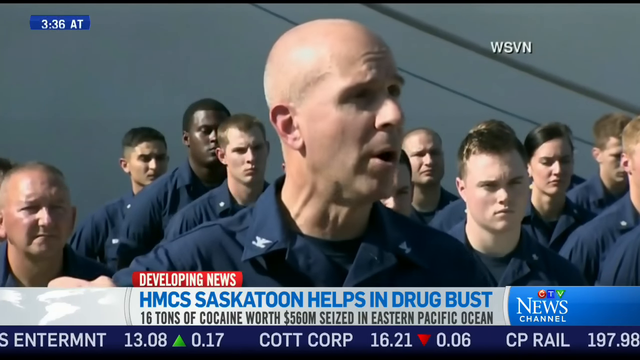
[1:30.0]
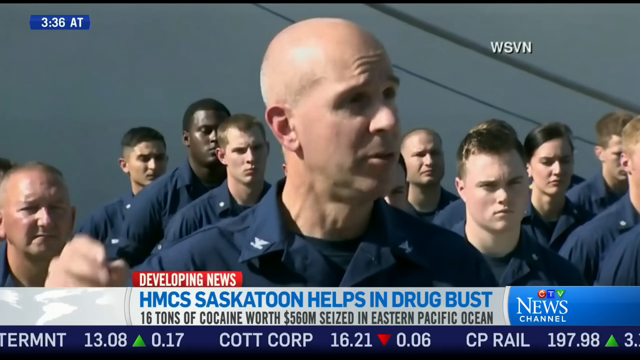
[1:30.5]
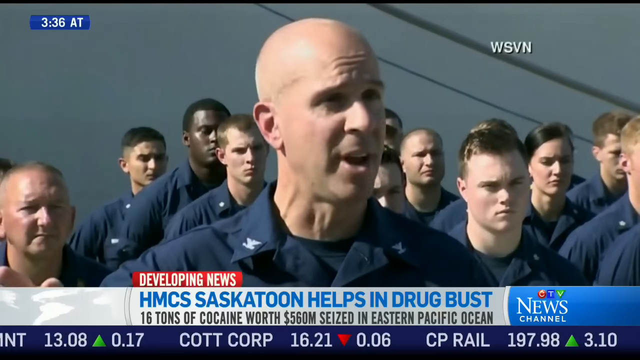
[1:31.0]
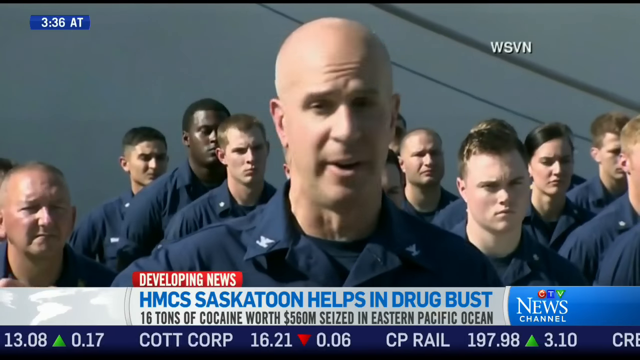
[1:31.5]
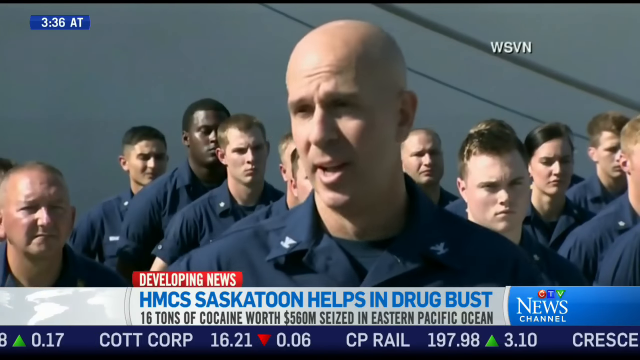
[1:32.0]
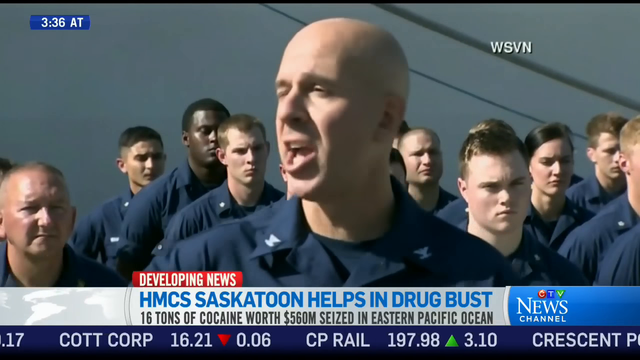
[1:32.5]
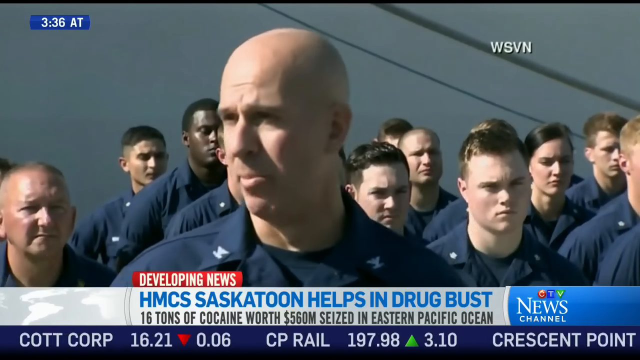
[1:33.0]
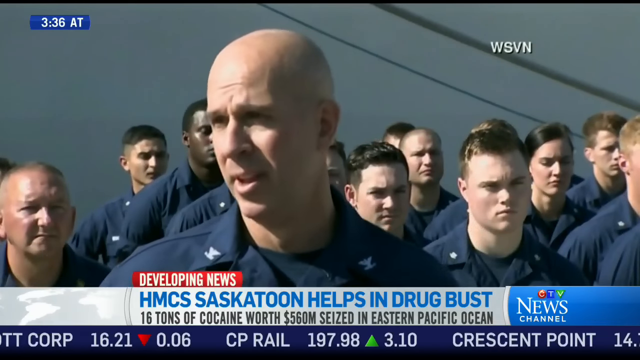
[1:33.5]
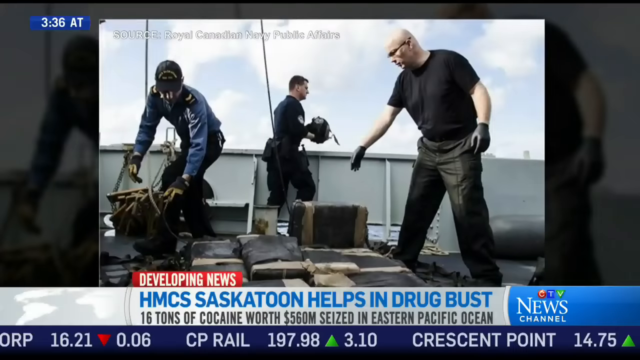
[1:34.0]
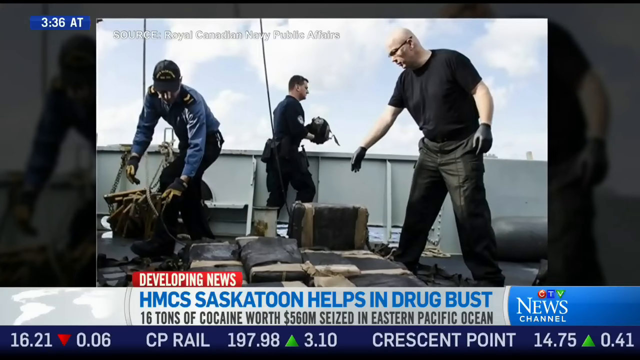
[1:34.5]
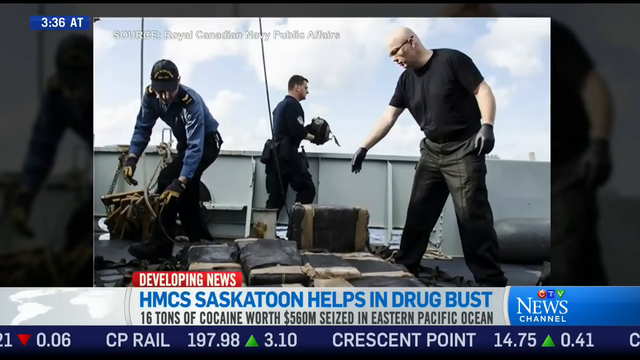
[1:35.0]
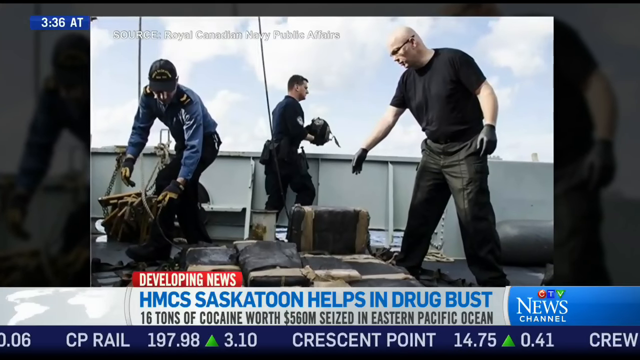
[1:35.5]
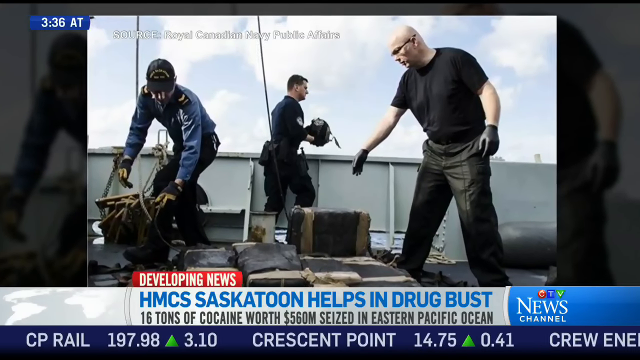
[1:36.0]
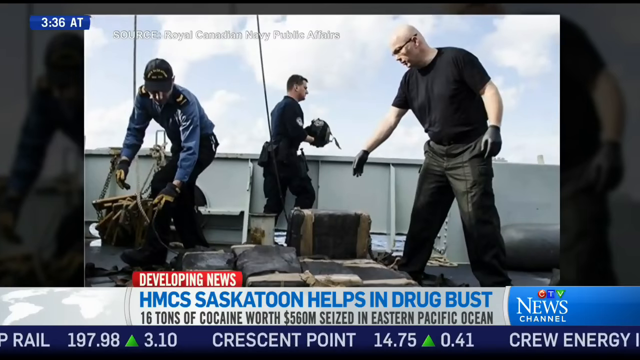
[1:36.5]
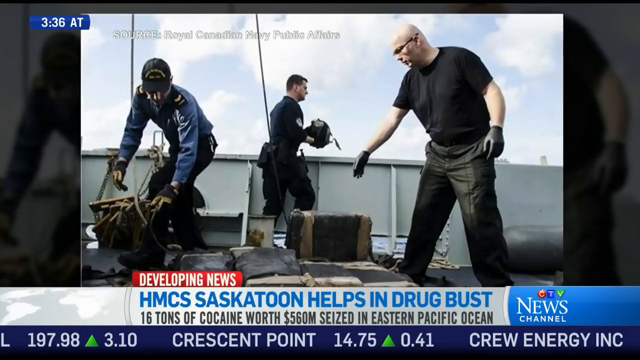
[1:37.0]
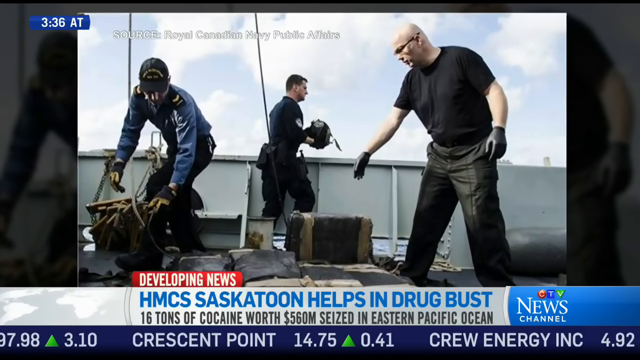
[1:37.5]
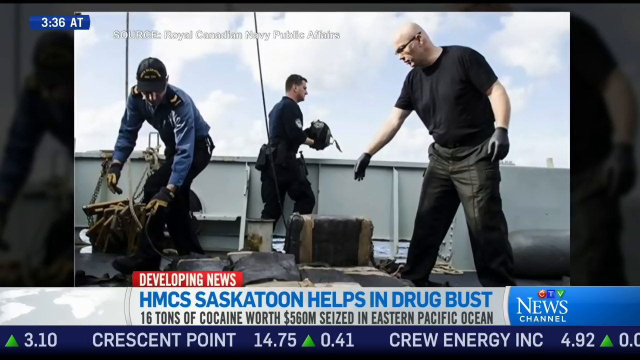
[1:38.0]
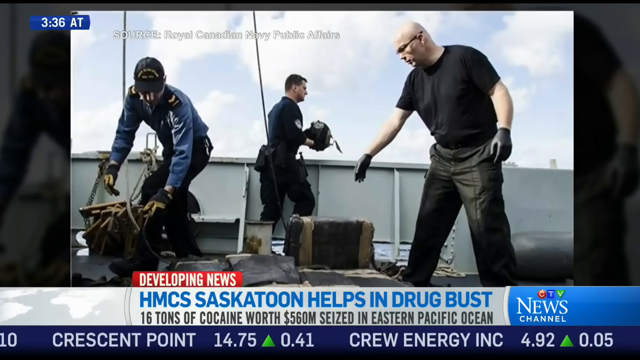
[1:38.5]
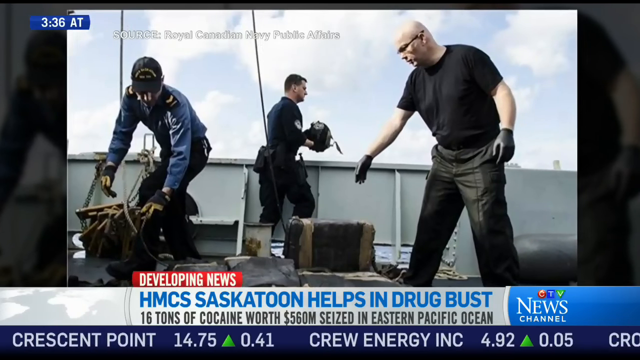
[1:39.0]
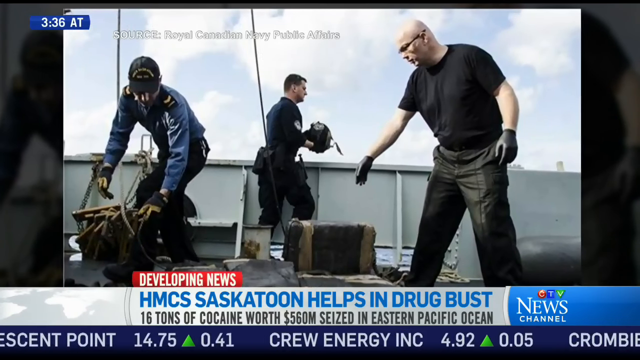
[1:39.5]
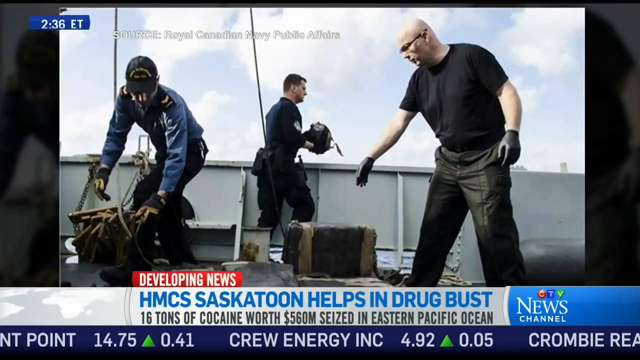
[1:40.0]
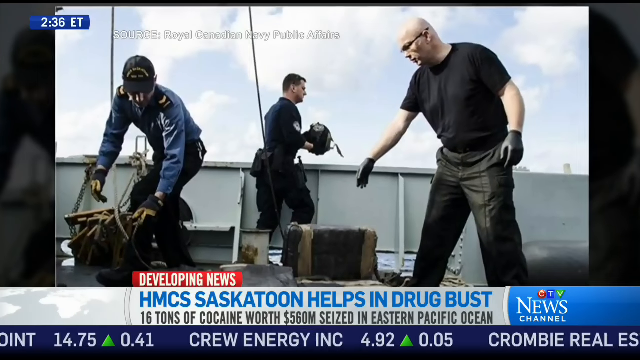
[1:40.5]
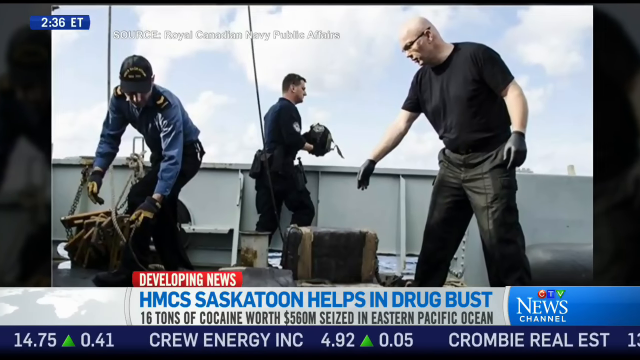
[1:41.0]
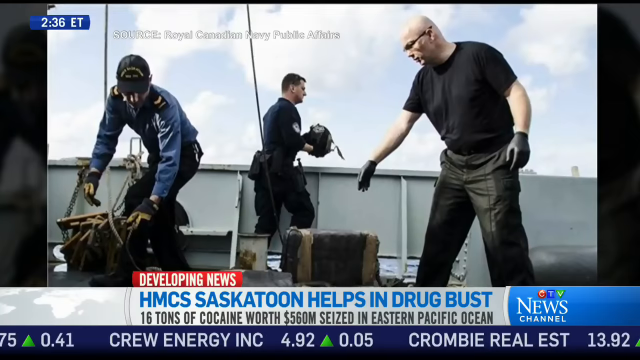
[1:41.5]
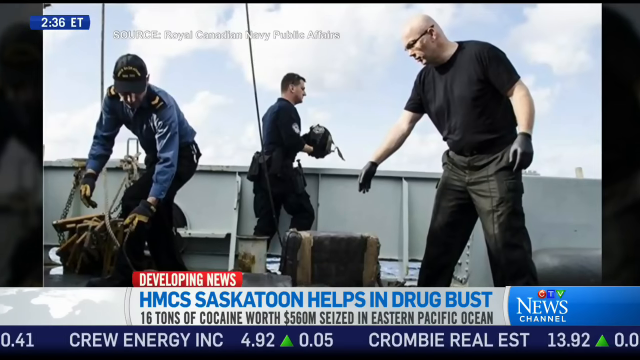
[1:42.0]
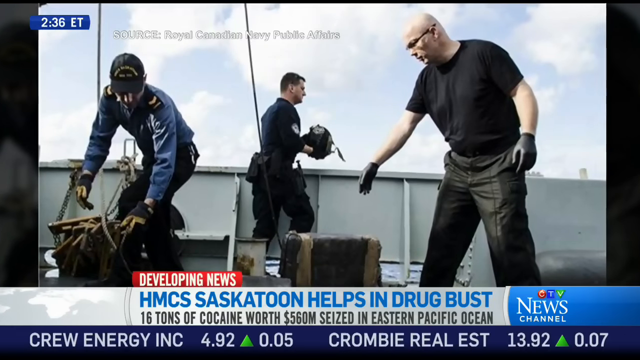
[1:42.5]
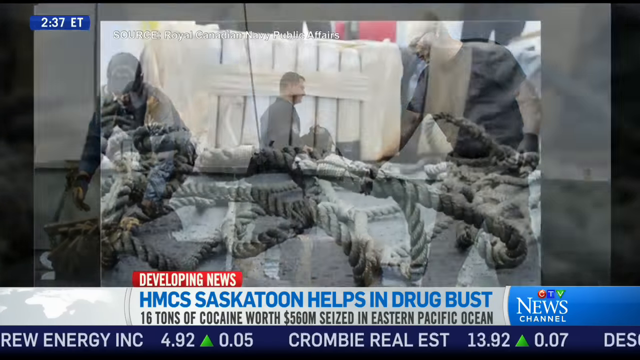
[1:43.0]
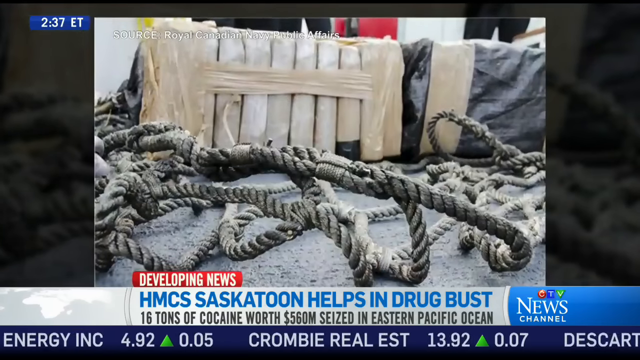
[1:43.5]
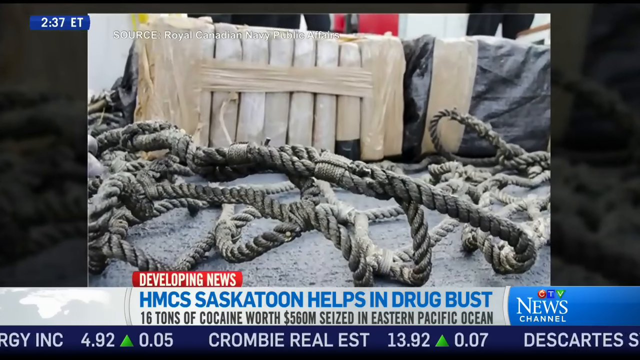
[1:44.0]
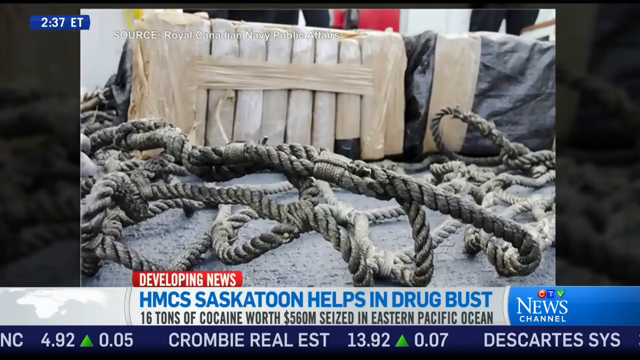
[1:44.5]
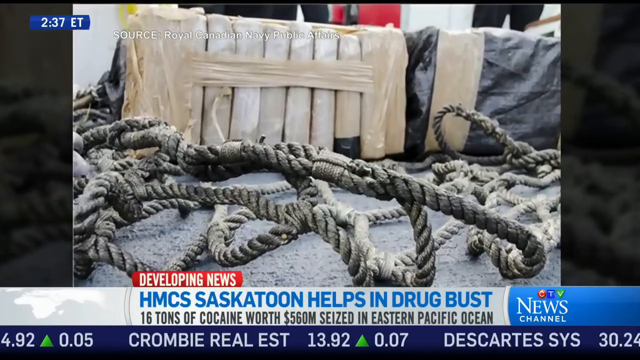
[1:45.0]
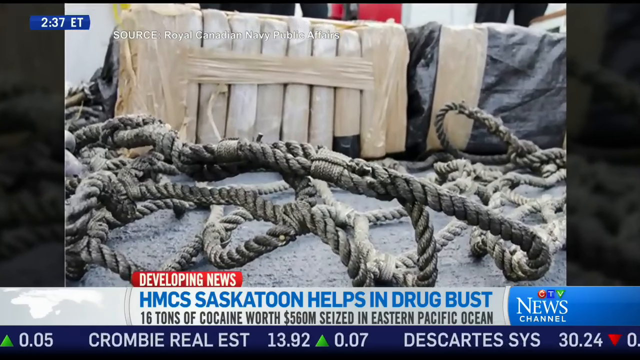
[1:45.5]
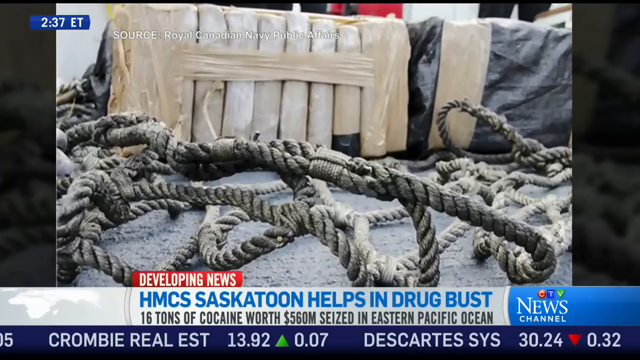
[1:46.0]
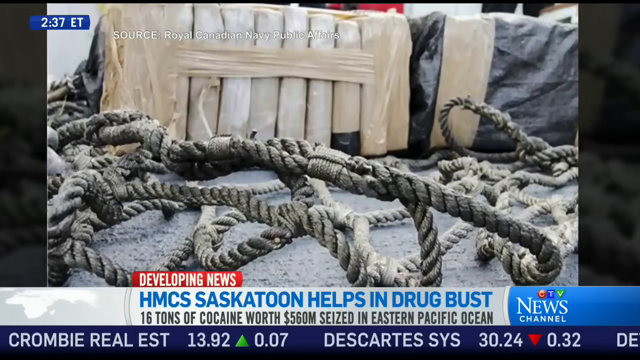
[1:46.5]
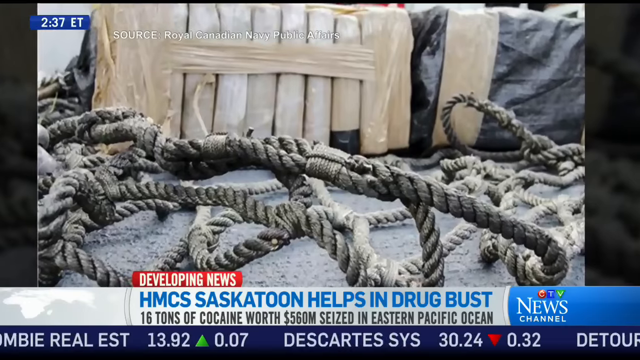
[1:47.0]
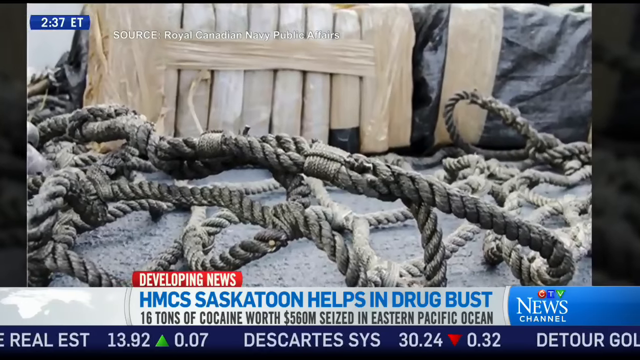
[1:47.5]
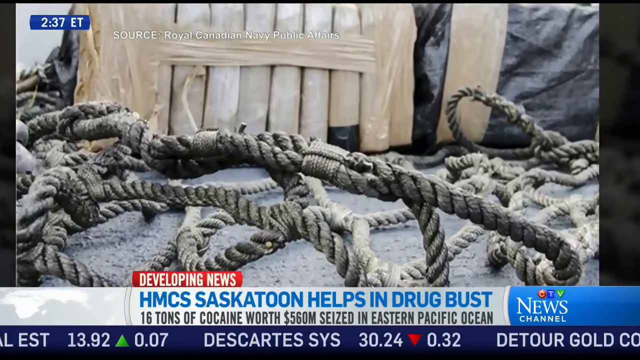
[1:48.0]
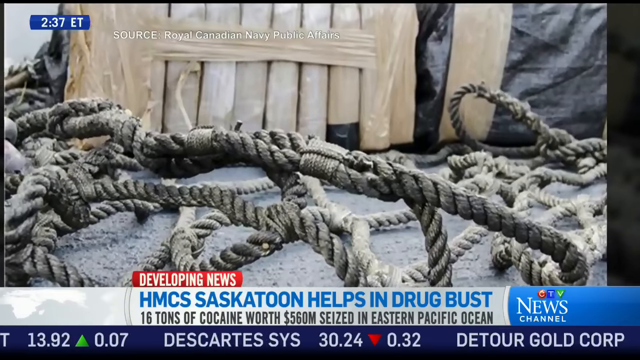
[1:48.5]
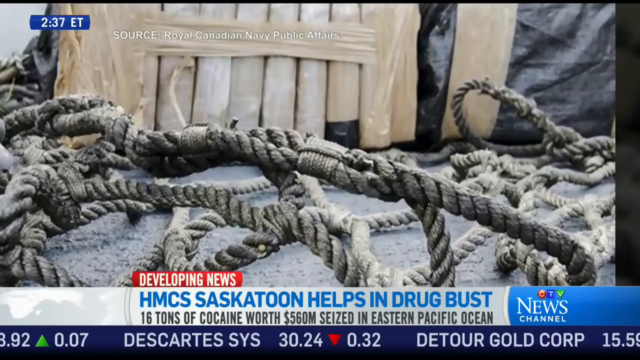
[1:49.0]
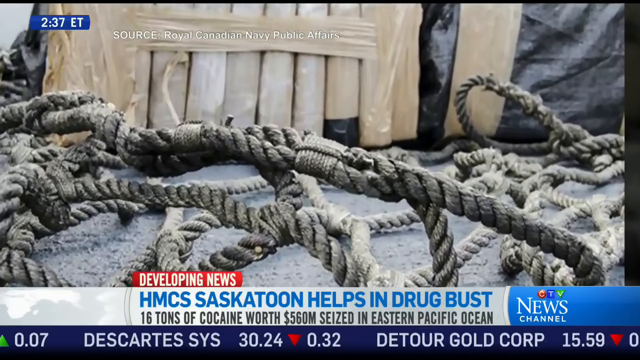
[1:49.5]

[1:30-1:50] A pretty bald man, with some veins kind of visible in his head and neck, stands in front of a group of what look like soldiers or Coast Guard members, all wearing dark blue uniforms with what look like pins in the collars. He is giving what appears to be a press conference. At the bottom, the developing news ticker reads "HMCS Saskatoon helps drug bust 16 tons of cocaine worth 560 million seized the Eastern Pacific Ocean." The video then goes to a picture and zooms into it, showing what looks like the Coast Guard: one in diving gear, one taking off his helmet, and a man on the boat in a black shirt who looks like he has wet pants, along with gloves. Another picture shows them moving things on the boat, as if fishing things out of the water, and another shows the ropes and bricks they were pulling out; the camera pans in on that picture, showing that everything was taped and roped together.